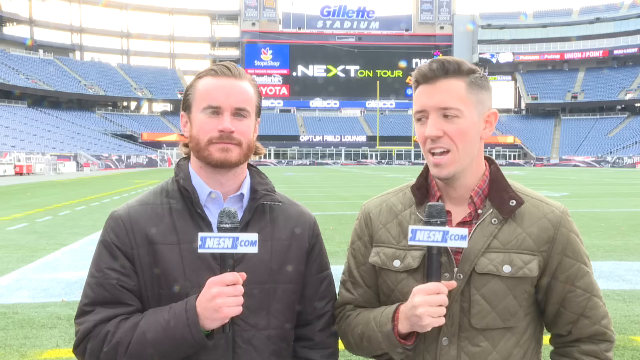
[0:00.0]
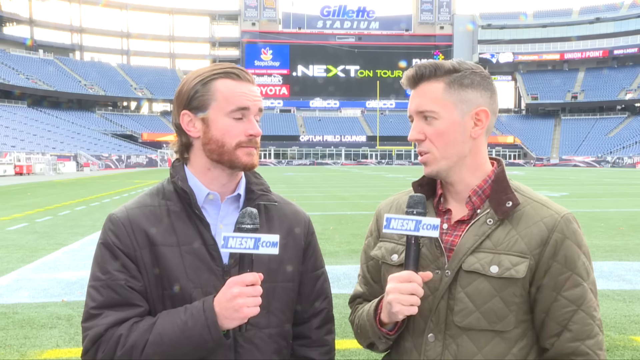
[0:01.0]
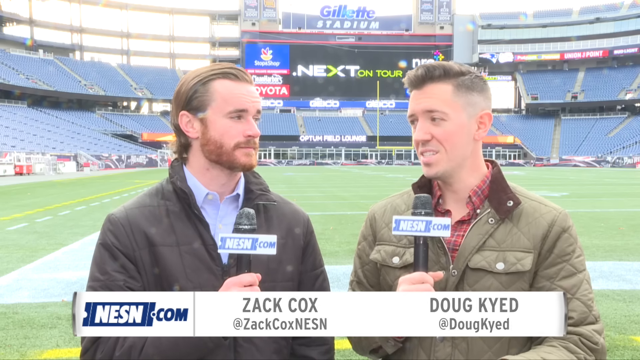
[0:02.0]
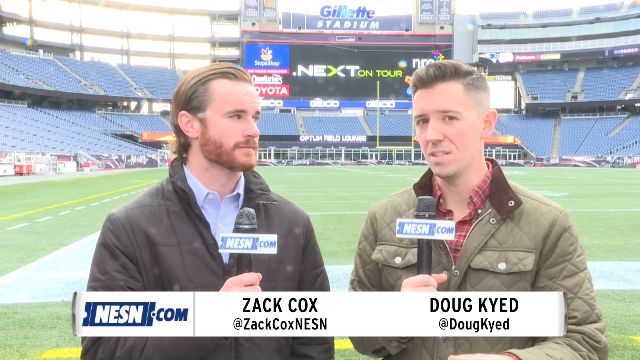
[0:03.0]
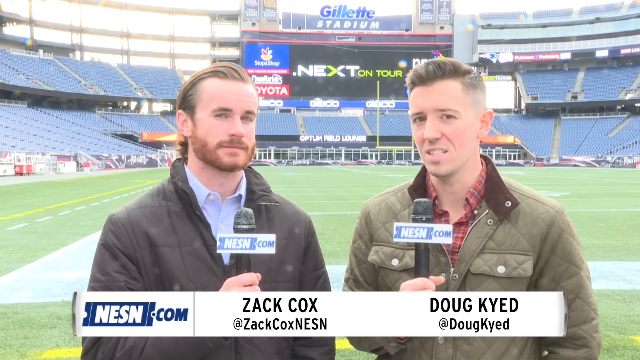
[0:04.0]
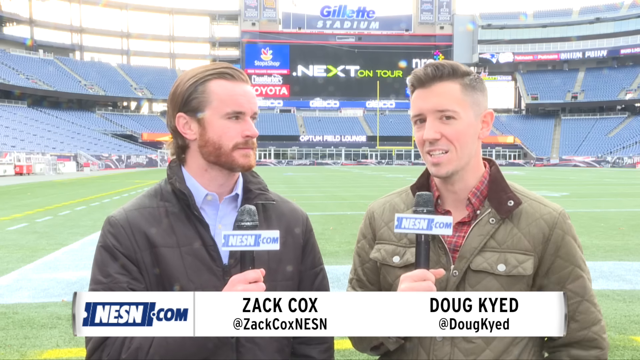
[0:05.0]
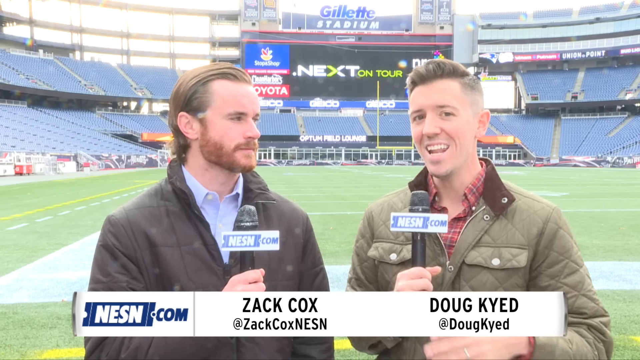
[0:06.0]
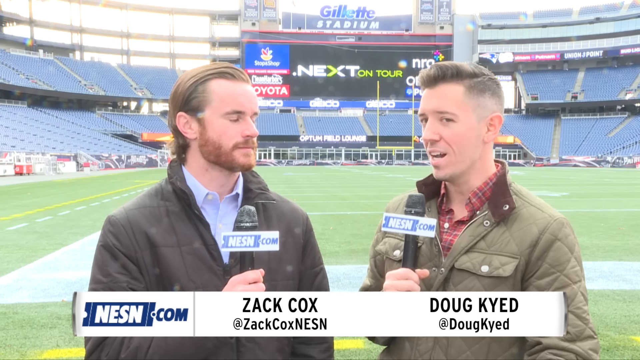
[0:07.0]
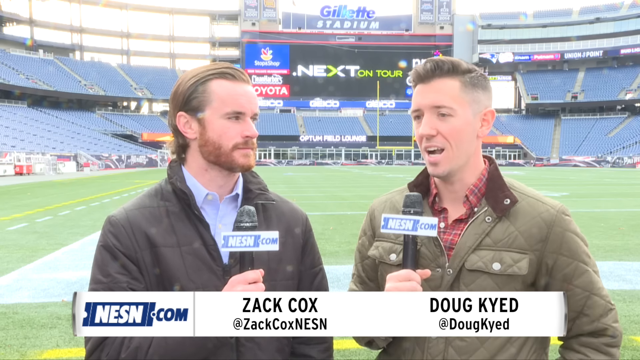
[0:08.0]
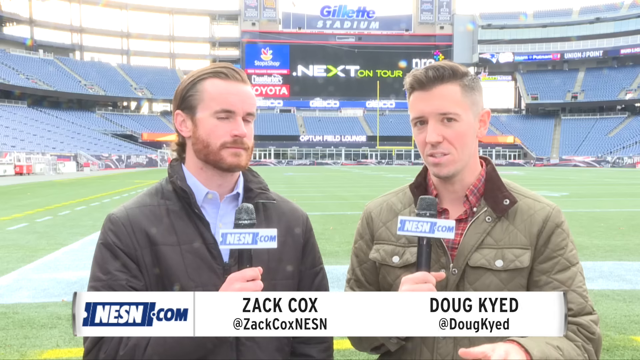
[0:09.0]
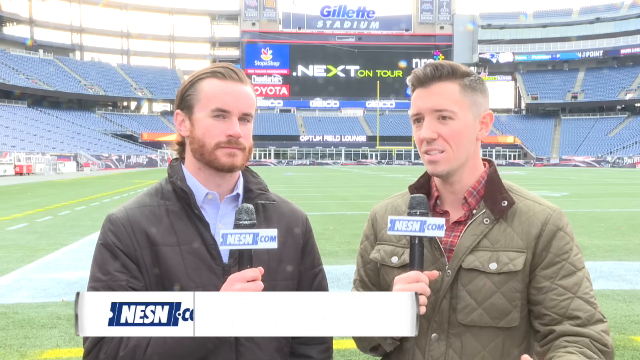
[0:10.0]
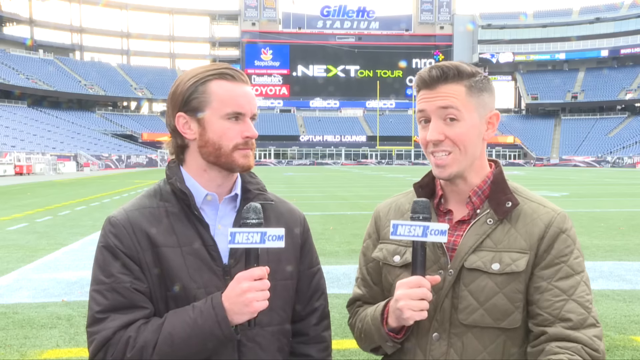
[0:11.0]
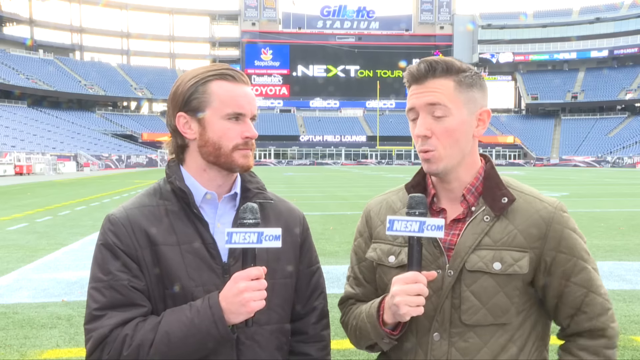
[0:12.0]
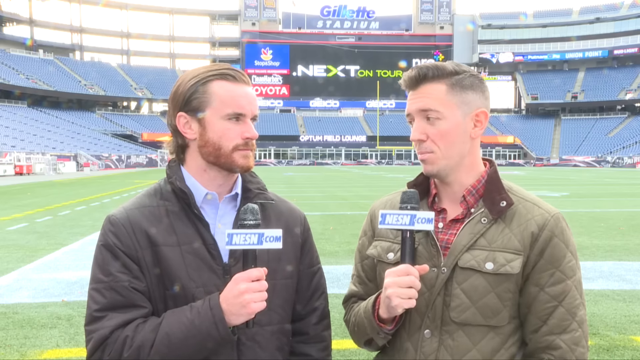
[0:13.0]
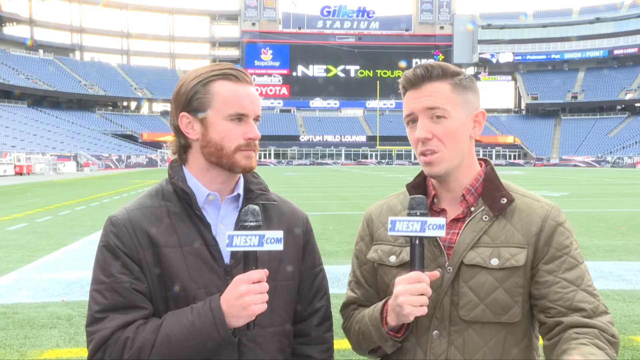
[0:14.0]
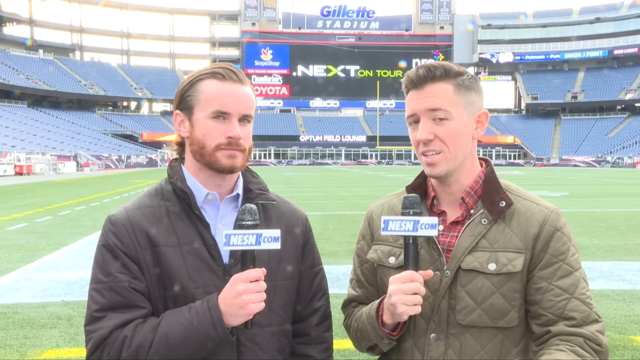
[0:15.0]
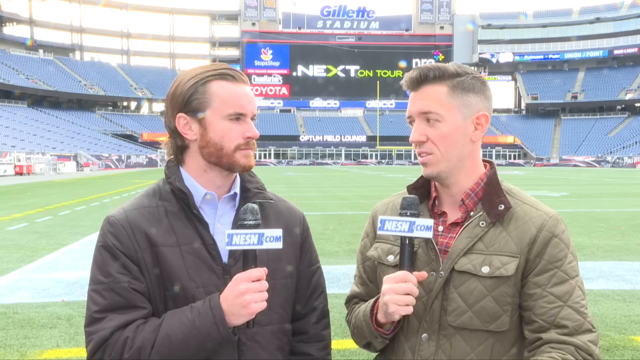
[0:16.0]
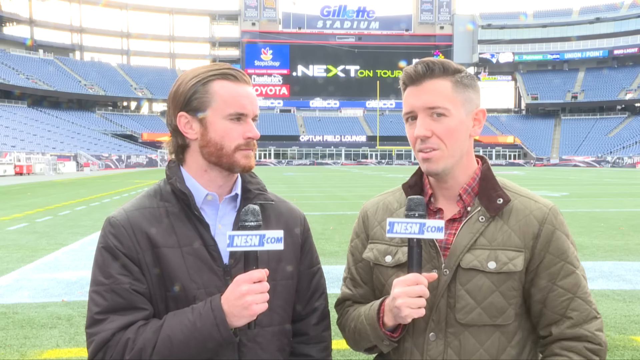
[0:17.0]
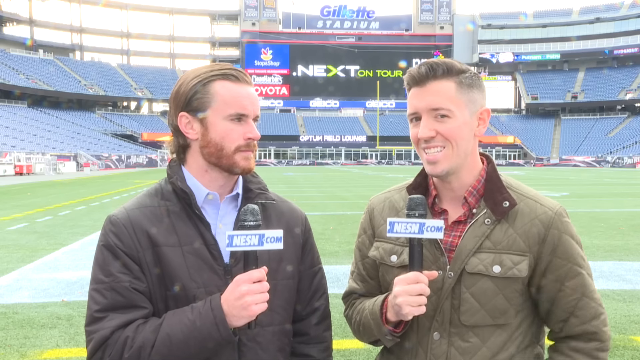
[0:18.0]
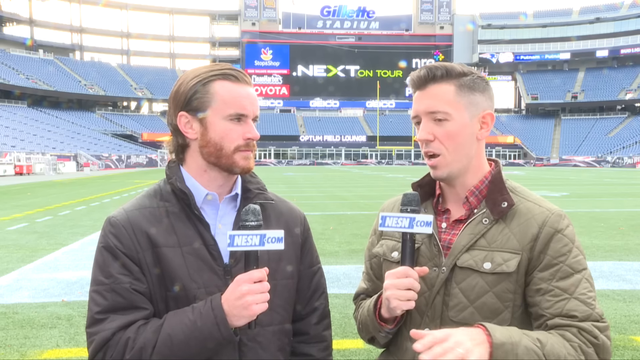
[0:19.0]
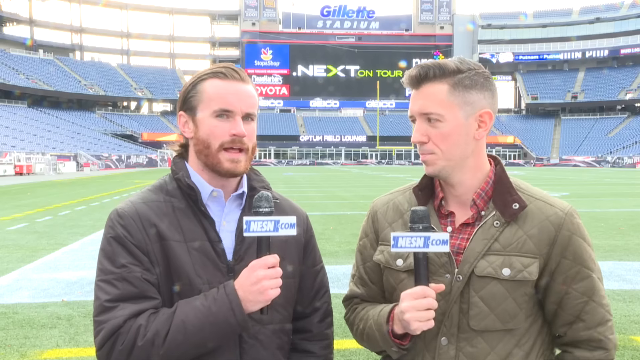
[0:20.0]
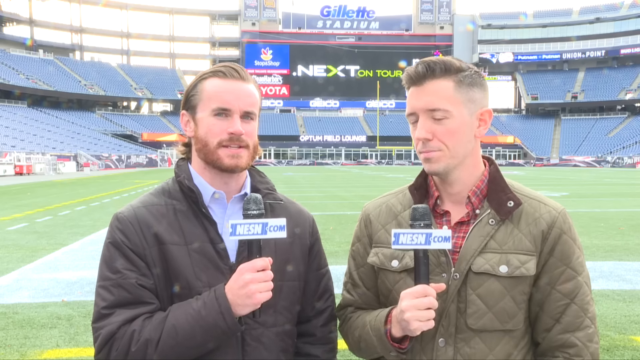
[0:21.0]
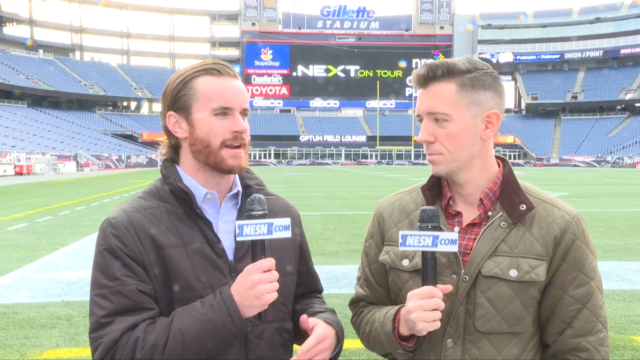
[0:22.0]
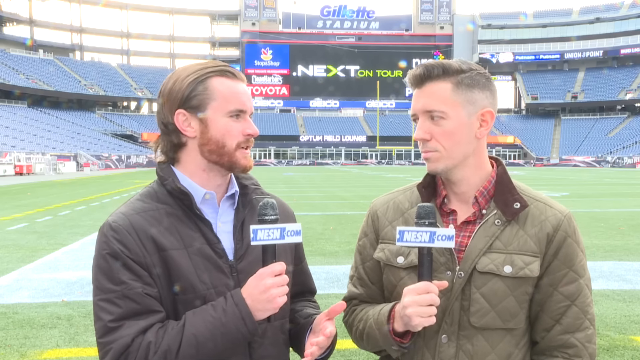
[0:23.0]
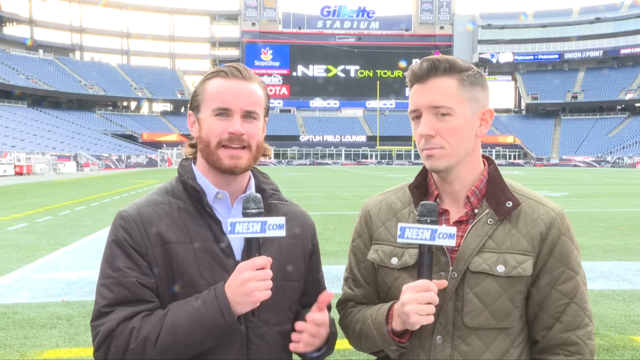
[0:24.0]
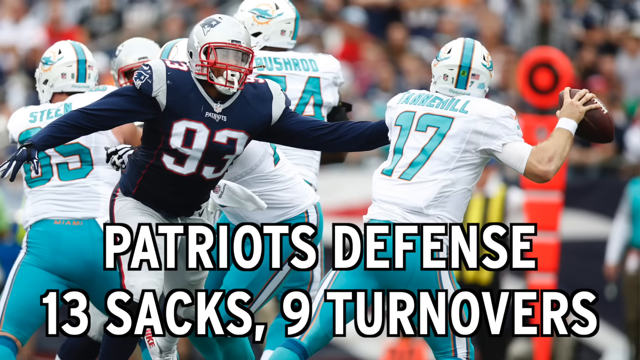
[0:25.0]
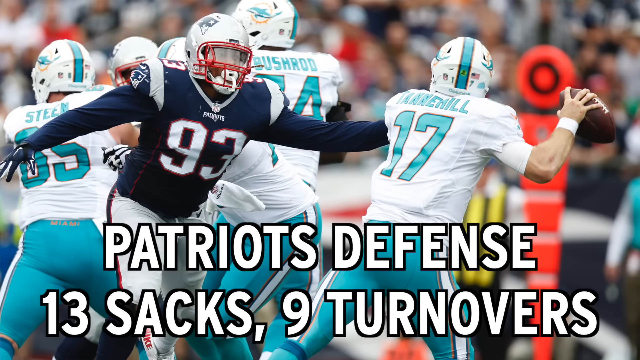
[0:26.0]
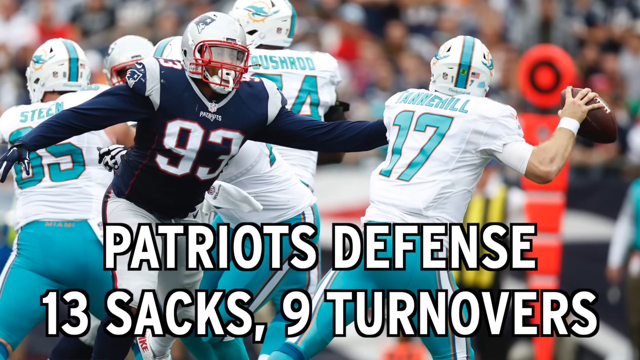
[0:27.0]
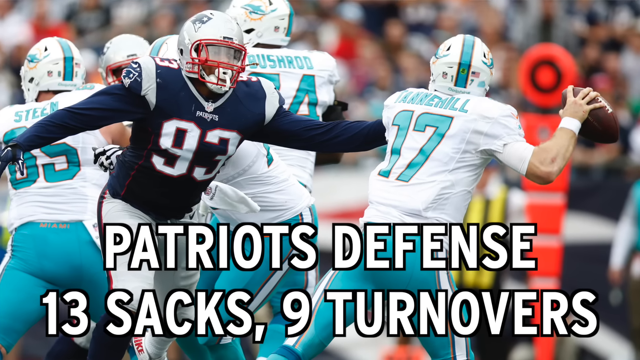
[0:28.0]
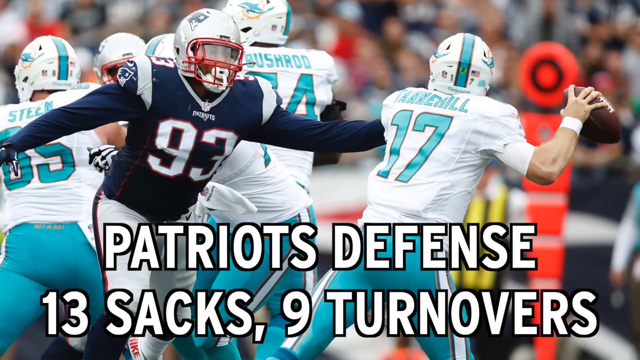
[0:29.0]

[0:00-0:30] Two sportscasters, Doug Kayad and Zach Cox, speak in front of a football field. They work for NESN.com, which is written on a box around each microphone. Doug talks first, holding the mic in his right hand and gesturing with his left. Zach then speaks, also holding the mic in his right hand and talking with his left. On-screen text reads "Patriots defense, 13 sacks, 9 turnovers" over a picture of an actual game. "Gillette Stadium" is written way up top on the uppermost bleacher. Above a screen are the words "Next on tour," and there is a Toyota sign, with a couple of other signs above it that cannot be seen. Something about "Optum Field" appears on the lower portion of the stadium seating. The football field is right near the two men, and the perimeter of a box is visible around both of them, so they appear to be standing in a box.